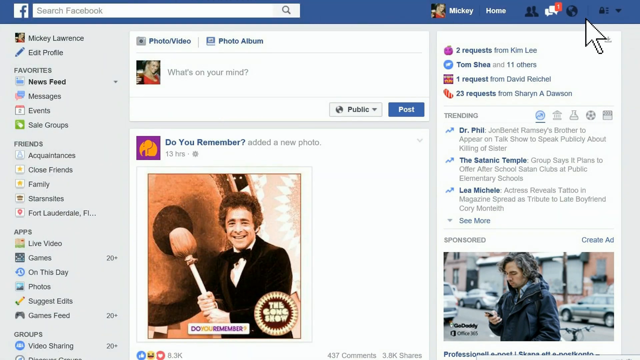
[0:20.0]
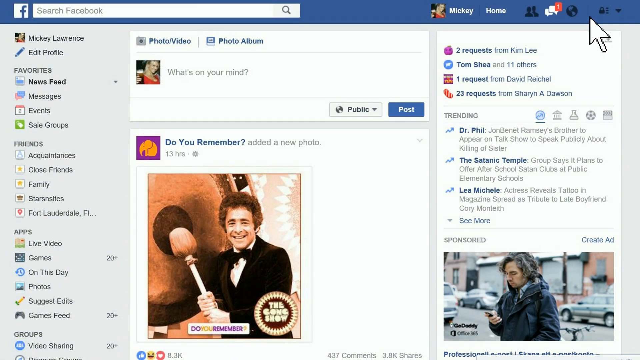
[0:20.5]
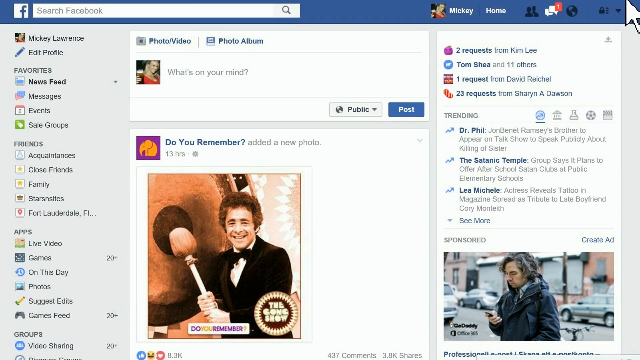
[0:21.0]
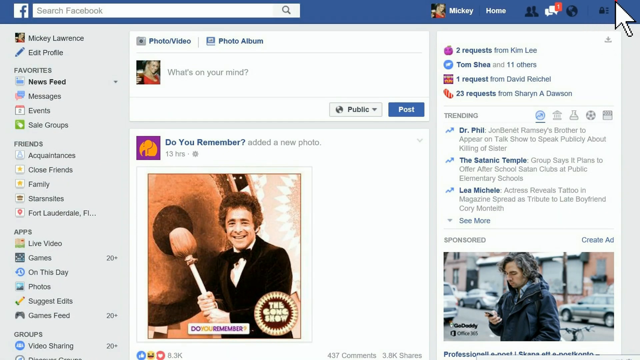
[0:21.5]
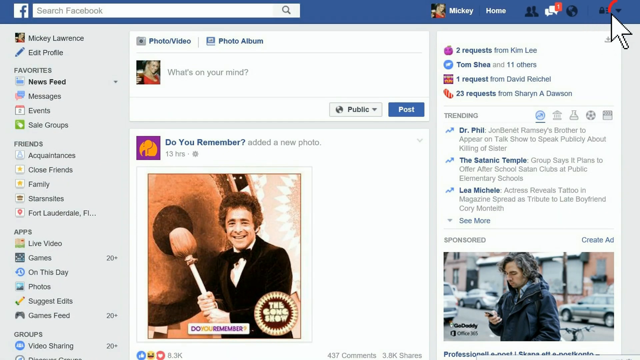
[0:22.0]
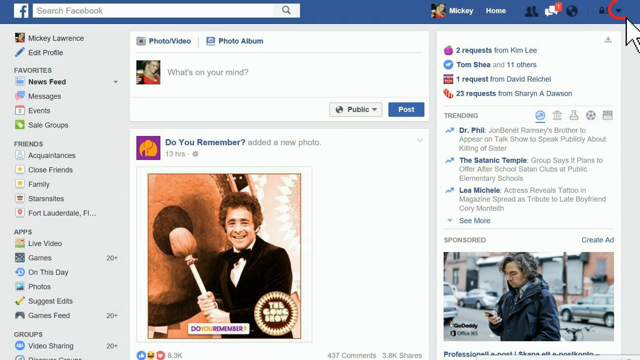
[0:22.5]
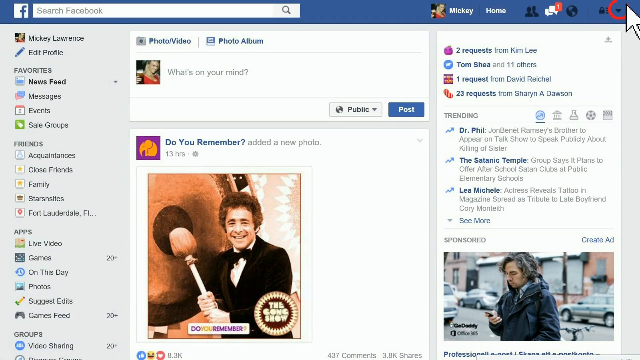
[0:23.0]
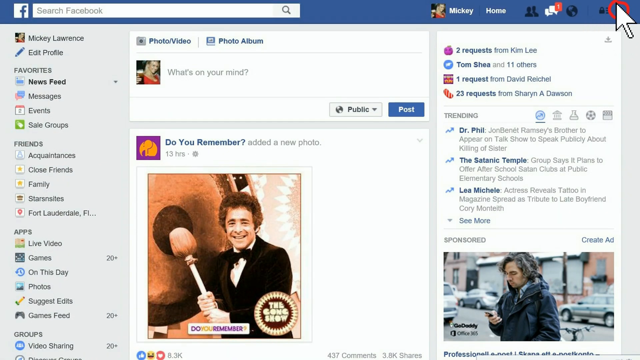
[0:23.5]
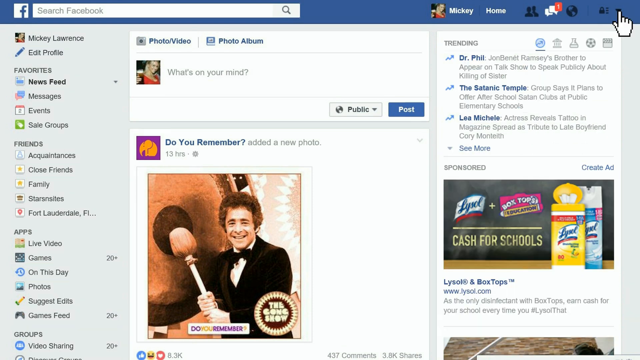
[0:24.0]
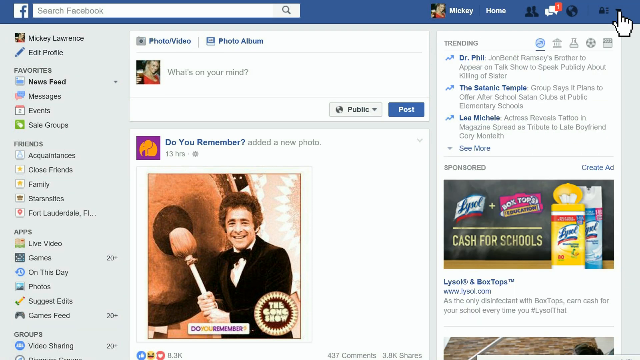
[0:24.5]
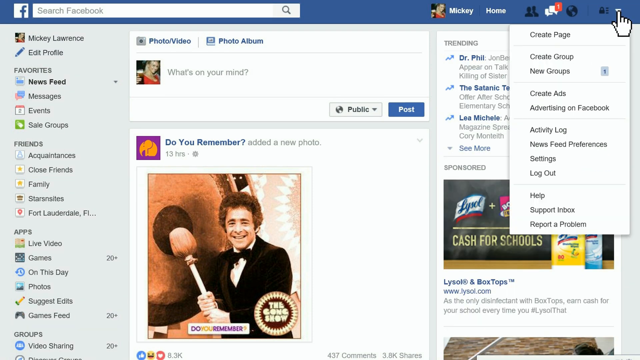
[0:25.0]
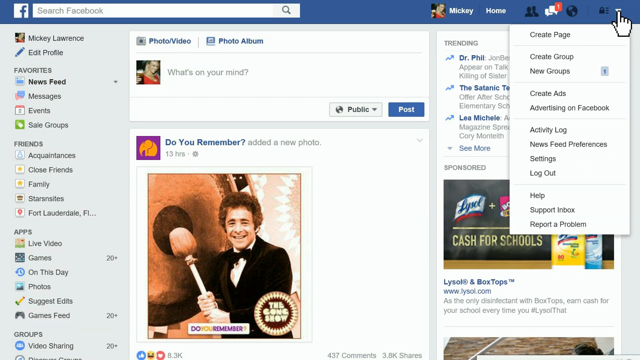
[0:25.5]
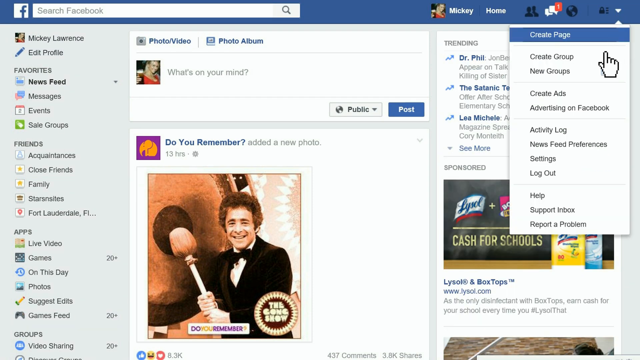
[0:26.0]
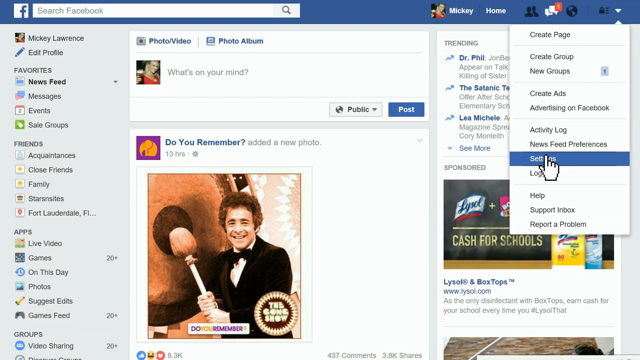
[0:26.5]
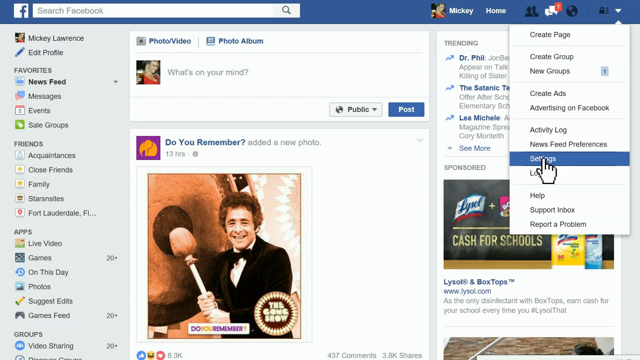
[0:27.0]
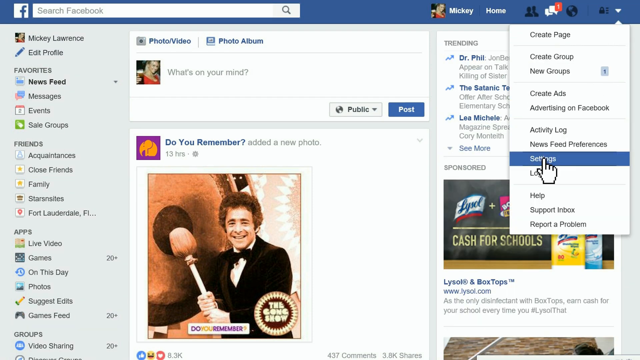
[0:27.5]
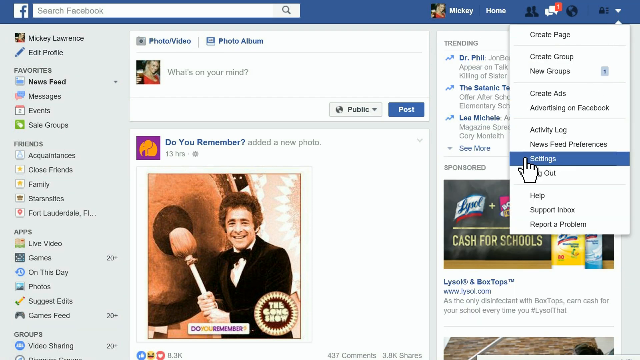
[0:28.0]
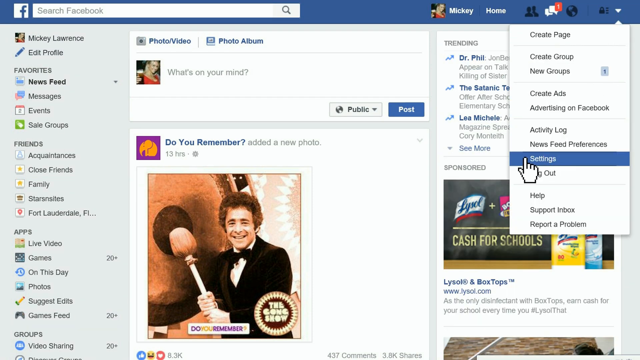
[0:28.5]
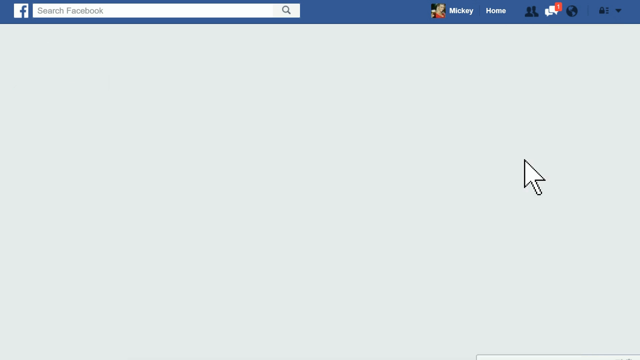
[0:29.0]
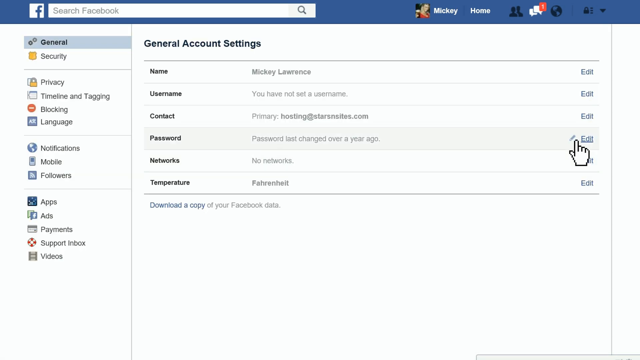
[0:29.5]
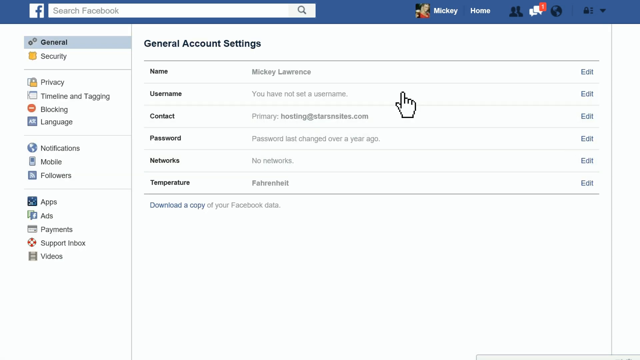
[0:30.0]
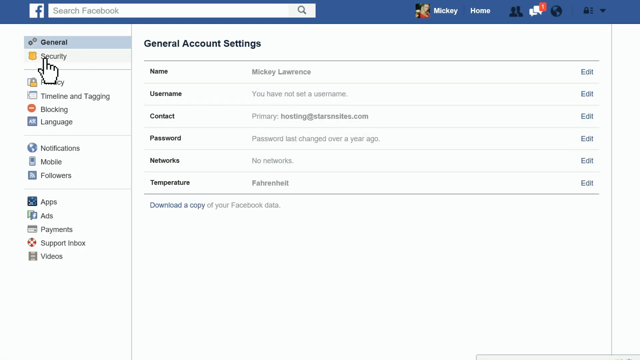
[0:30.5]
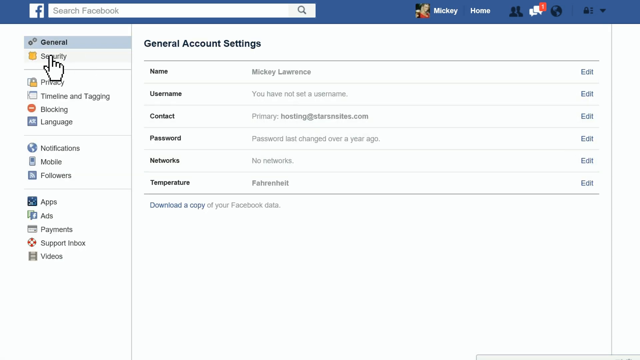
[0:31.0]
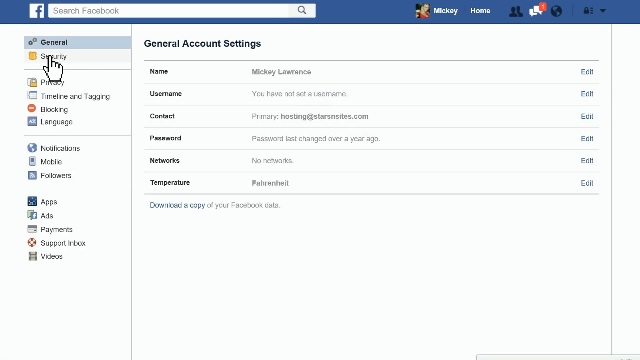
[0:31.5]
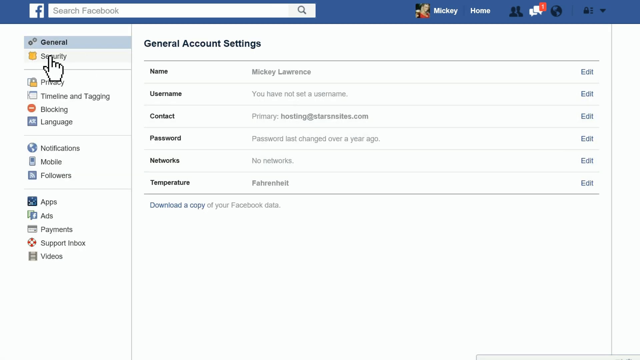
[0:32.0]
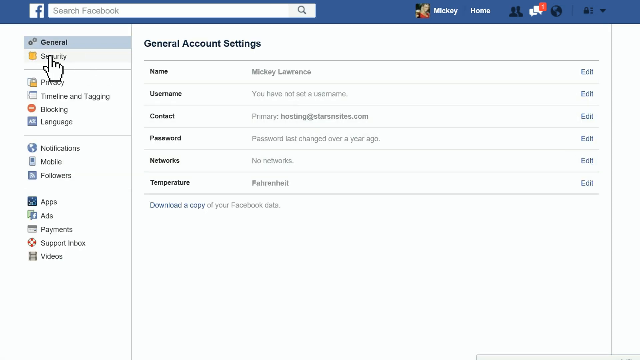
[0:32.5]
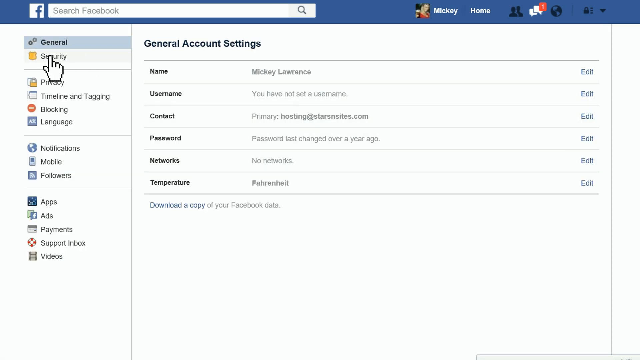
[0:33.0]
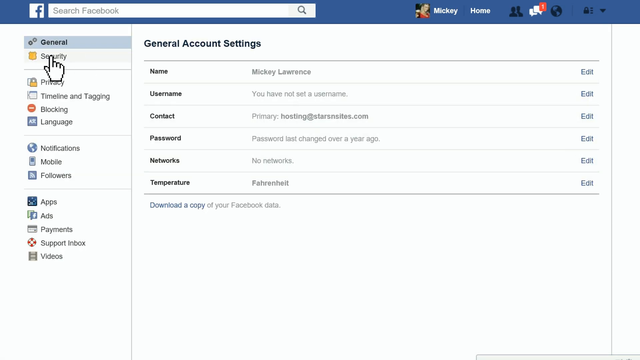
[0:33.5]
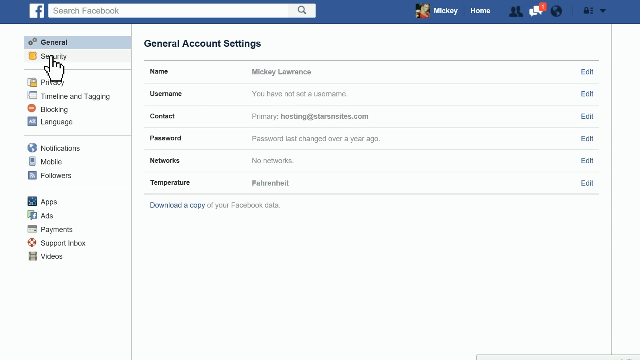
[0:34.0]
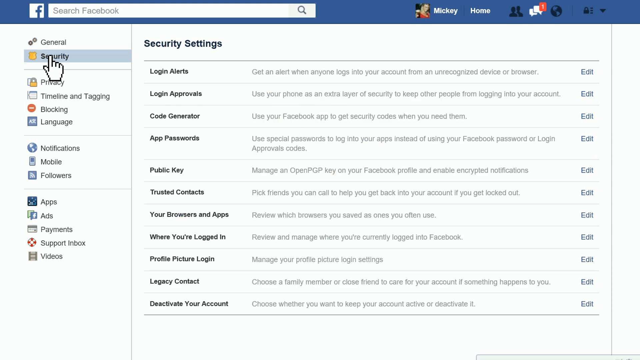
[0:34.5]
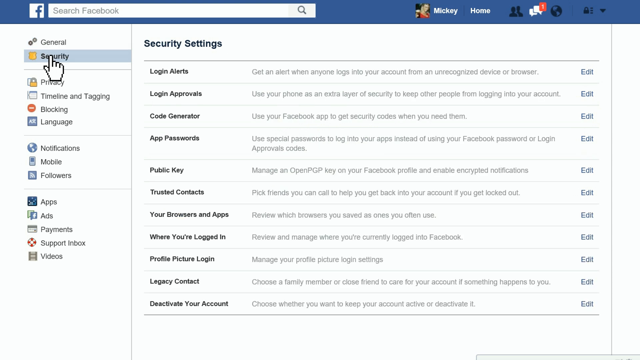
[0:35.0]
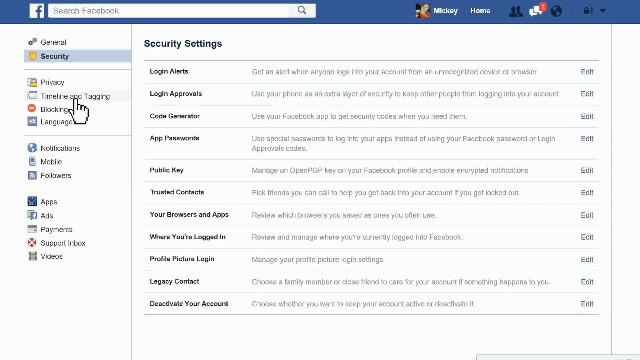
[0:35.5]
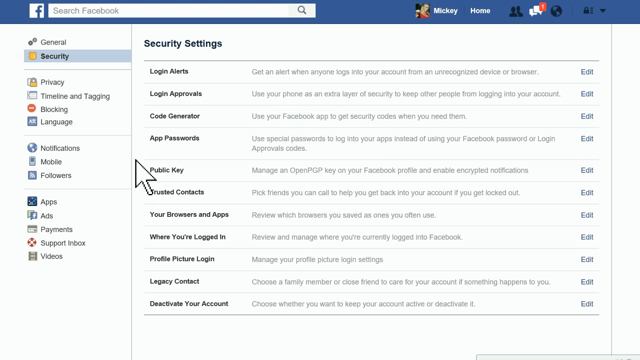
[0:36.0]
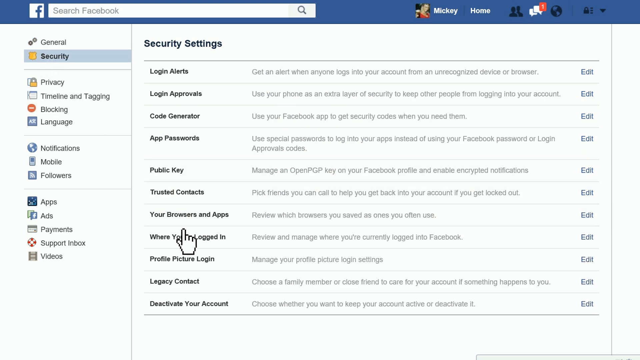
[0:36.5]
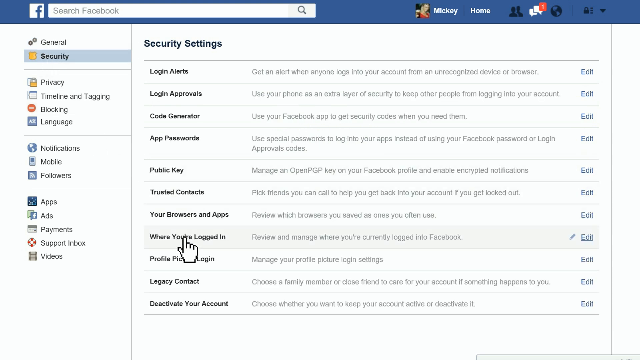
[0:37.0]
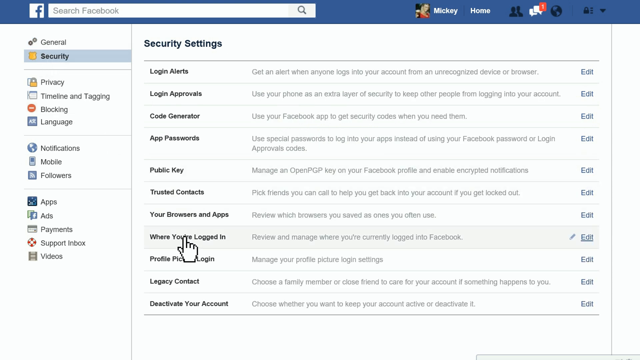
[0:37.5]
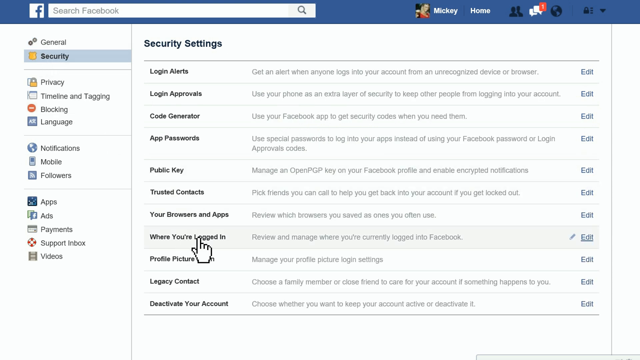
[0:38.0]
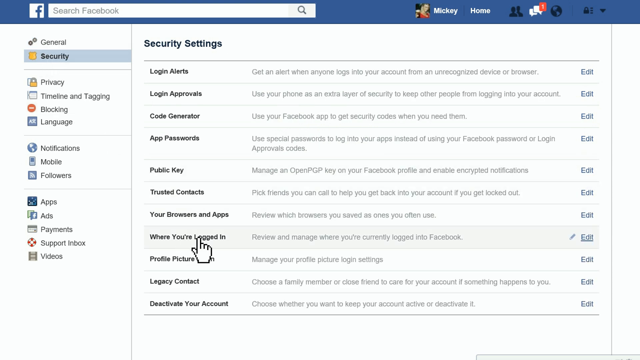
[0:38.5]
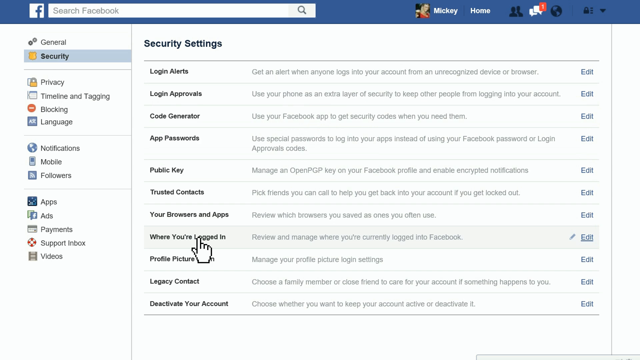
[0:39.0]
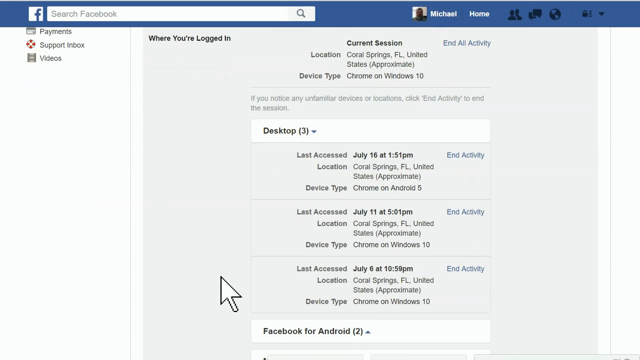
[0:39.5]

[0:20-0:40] The screen shows the home page of someone's Facebook account. A very large cursor in the upper right starts circling the small more-options arrow next to a padlock, opening a list of options: create page, create group, new groups, create ads, activity log, preferences for your news feed, configuration, logout, help, support, inbox, report a problem. The user selects the configuration option (settings in English) and goes to the security section on the left side, which contains many options such as log in, language, notifications, views and followers. The user then chooses the option "where you are connected", which shows which computers have the account open around the world.